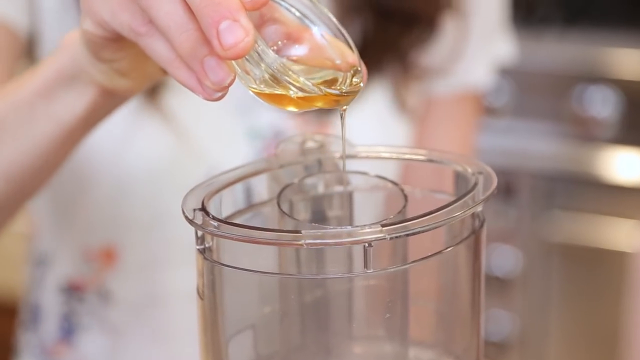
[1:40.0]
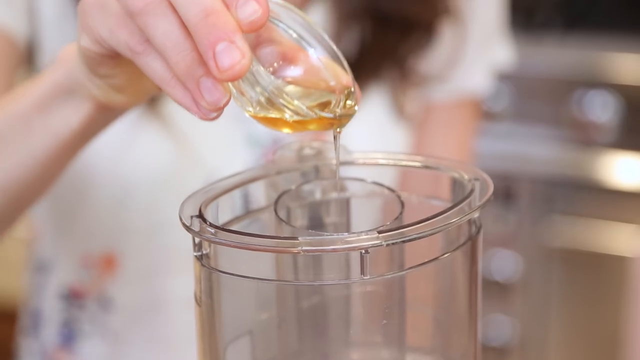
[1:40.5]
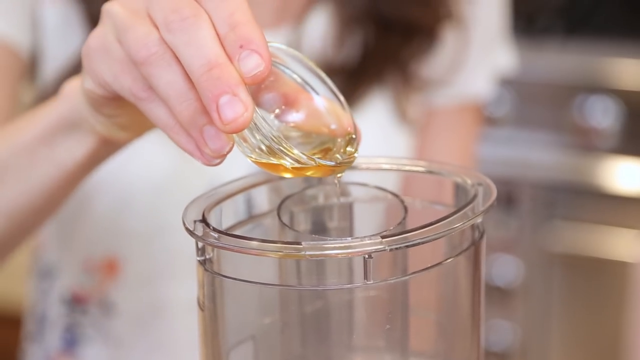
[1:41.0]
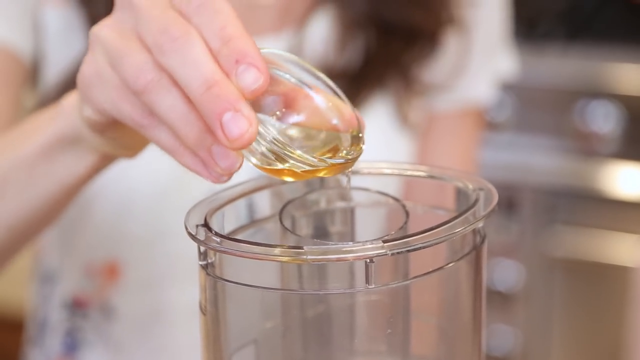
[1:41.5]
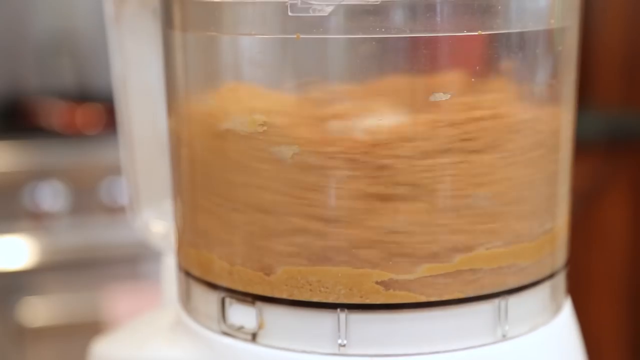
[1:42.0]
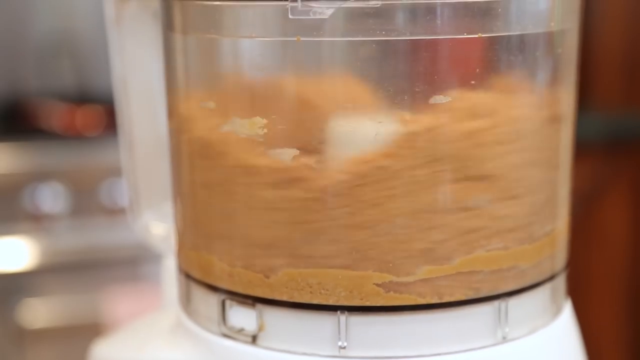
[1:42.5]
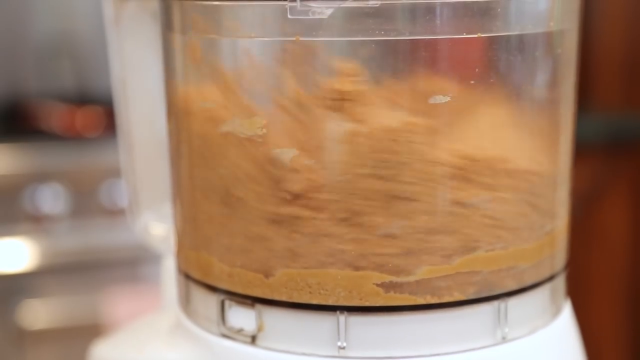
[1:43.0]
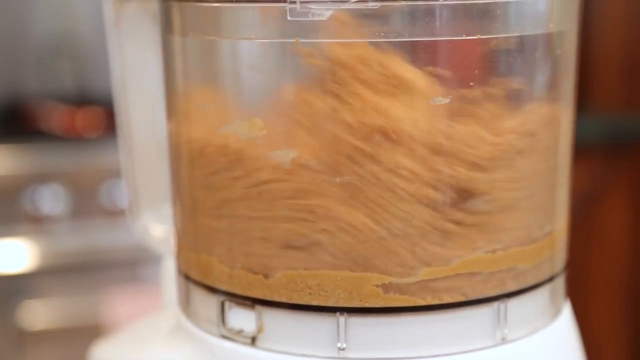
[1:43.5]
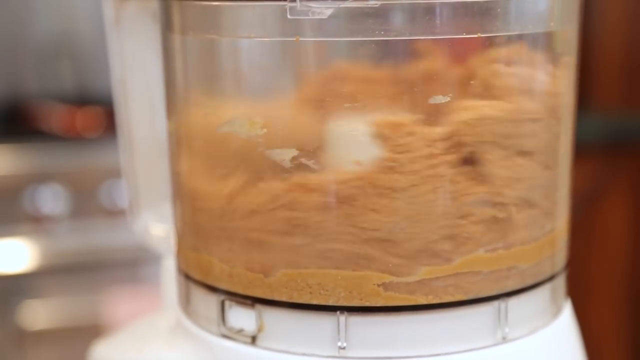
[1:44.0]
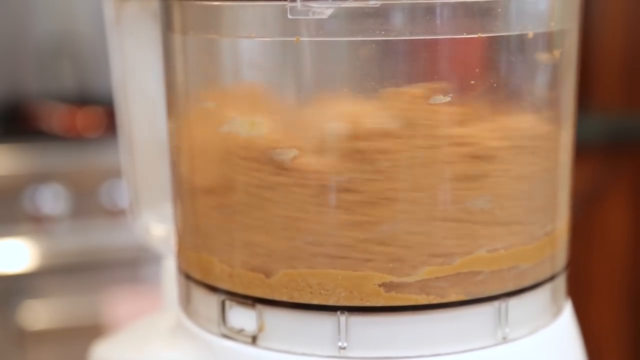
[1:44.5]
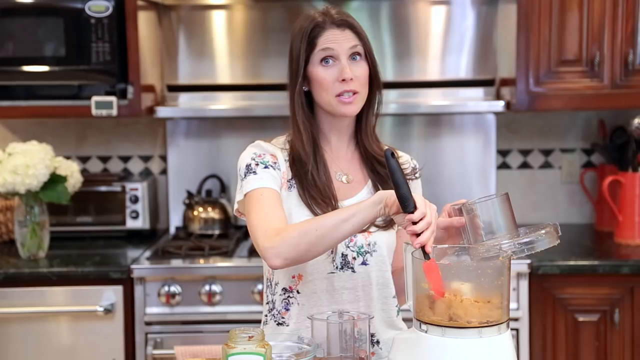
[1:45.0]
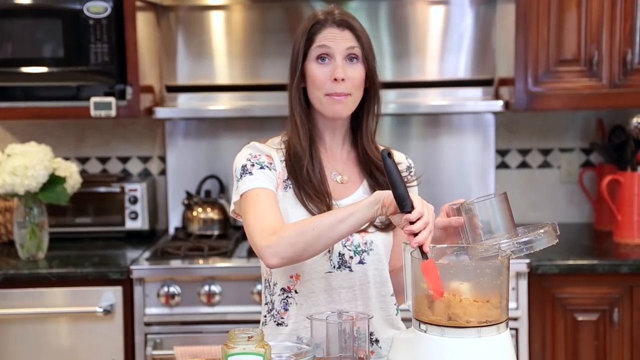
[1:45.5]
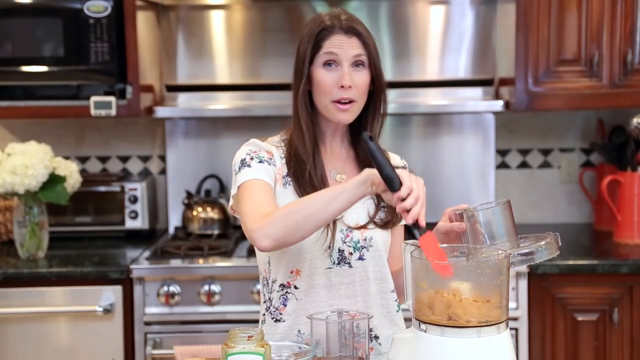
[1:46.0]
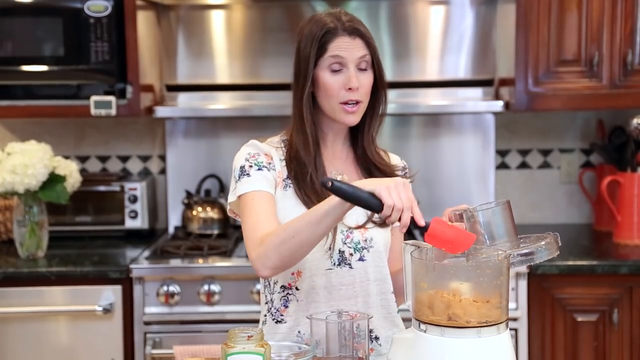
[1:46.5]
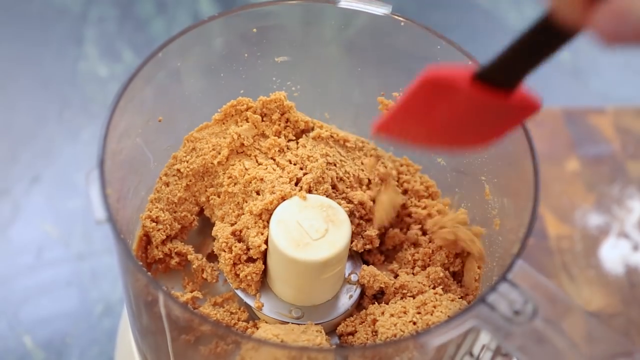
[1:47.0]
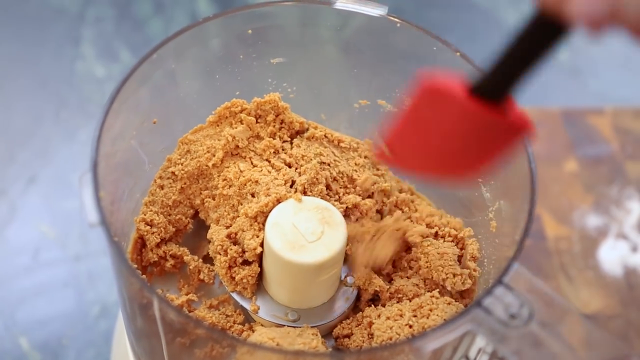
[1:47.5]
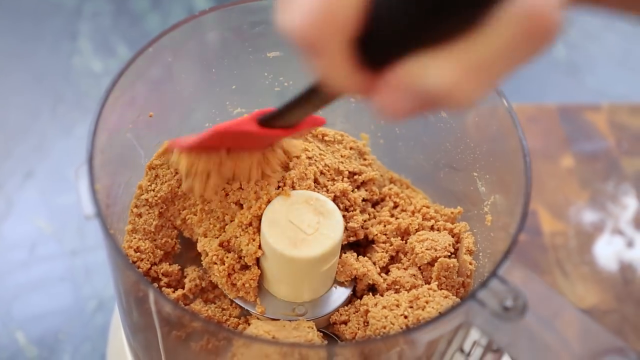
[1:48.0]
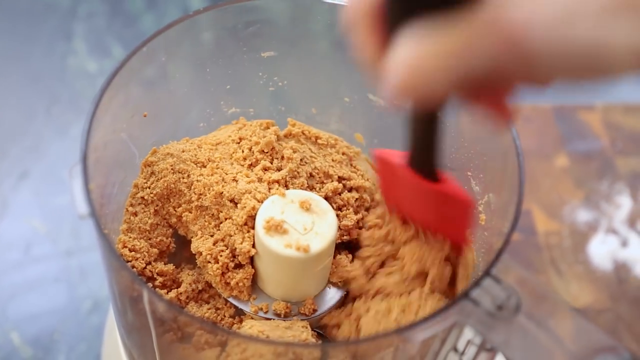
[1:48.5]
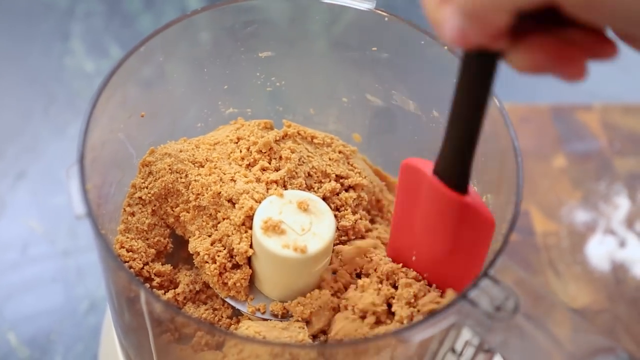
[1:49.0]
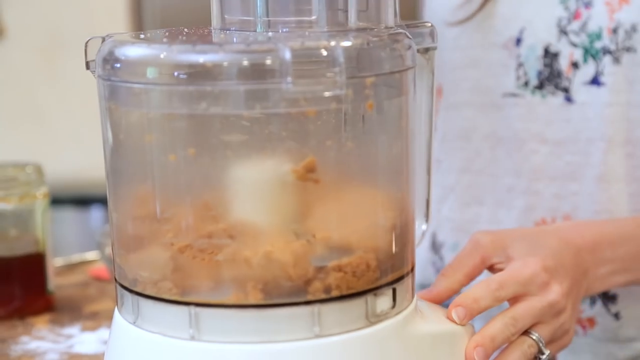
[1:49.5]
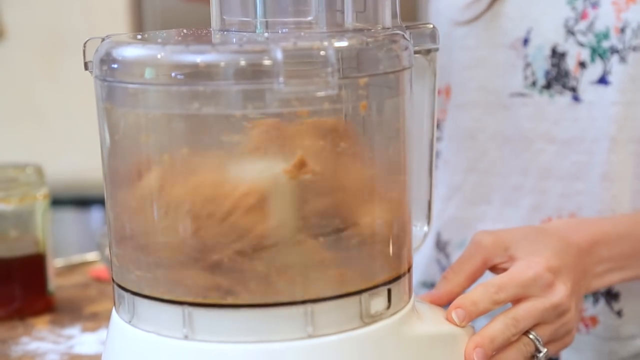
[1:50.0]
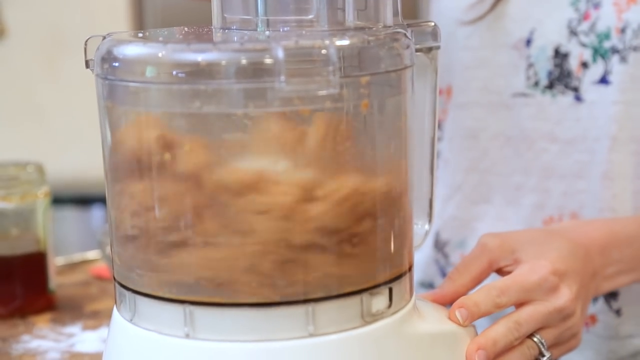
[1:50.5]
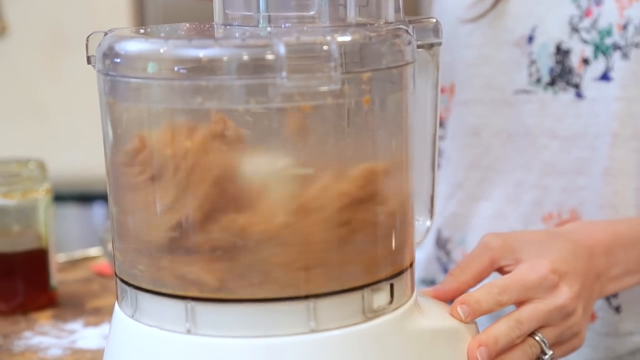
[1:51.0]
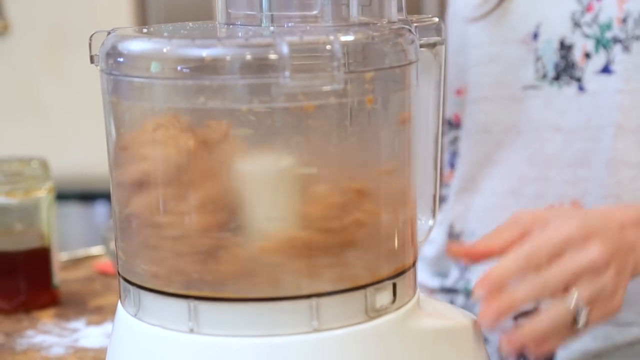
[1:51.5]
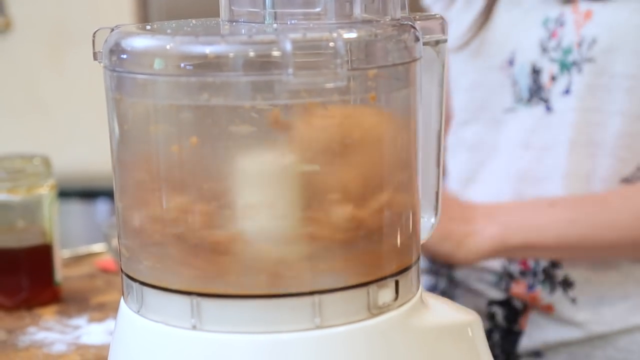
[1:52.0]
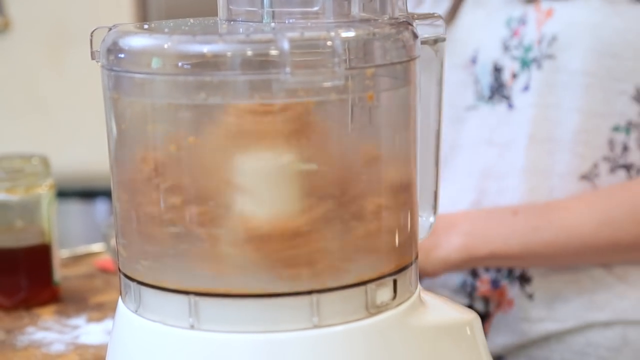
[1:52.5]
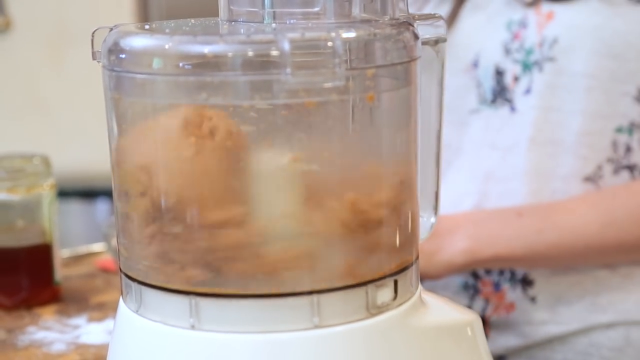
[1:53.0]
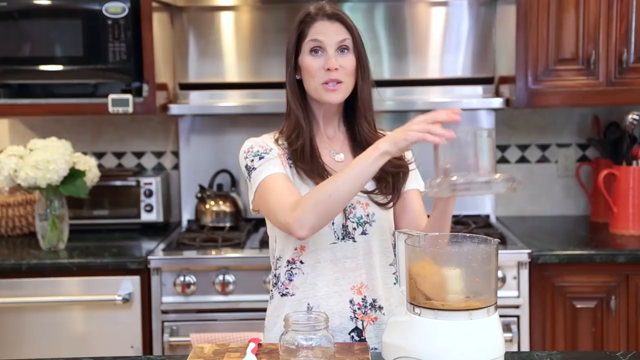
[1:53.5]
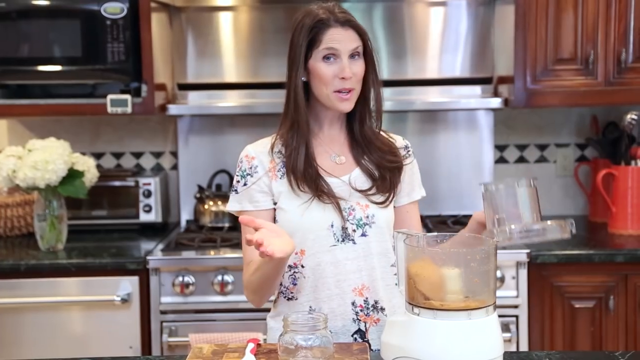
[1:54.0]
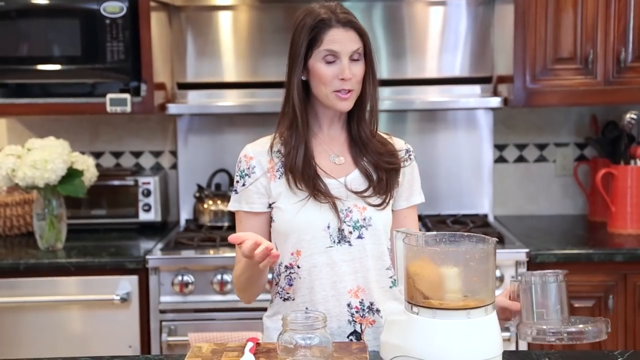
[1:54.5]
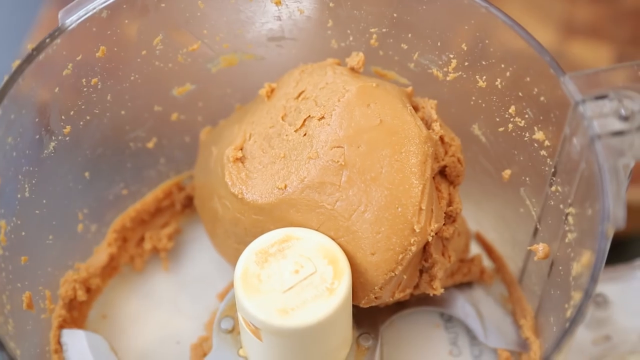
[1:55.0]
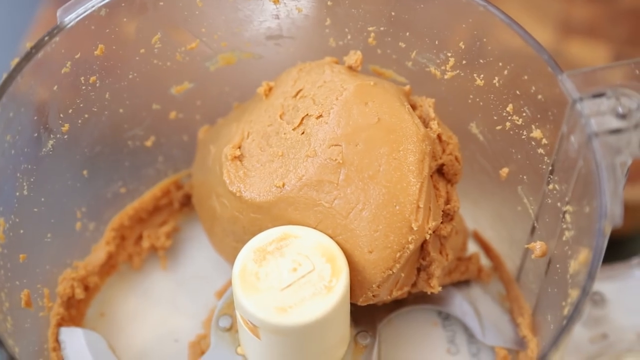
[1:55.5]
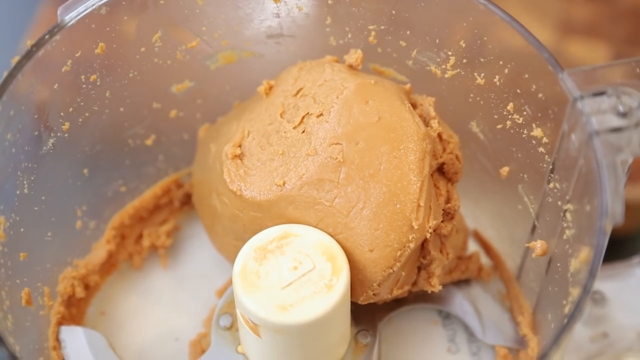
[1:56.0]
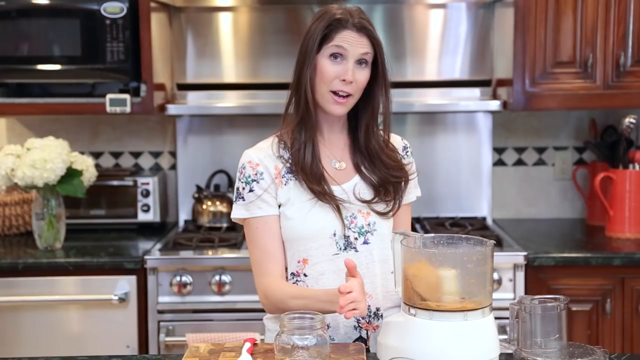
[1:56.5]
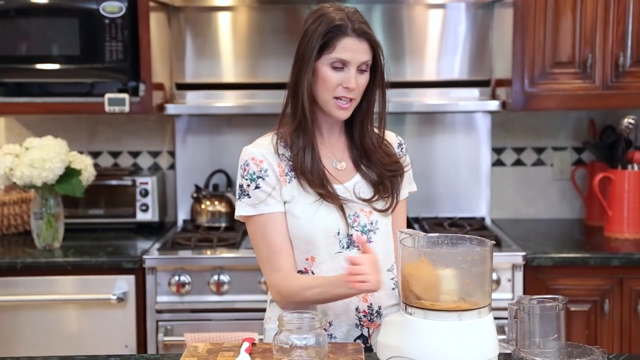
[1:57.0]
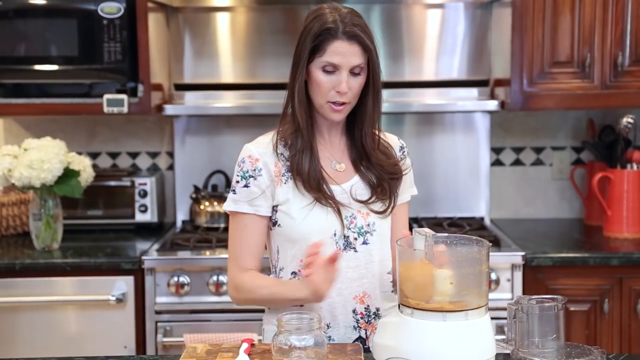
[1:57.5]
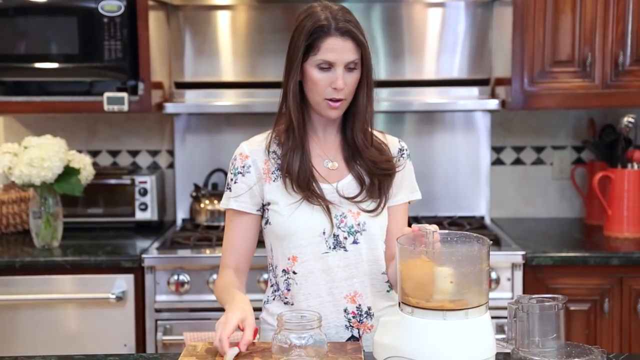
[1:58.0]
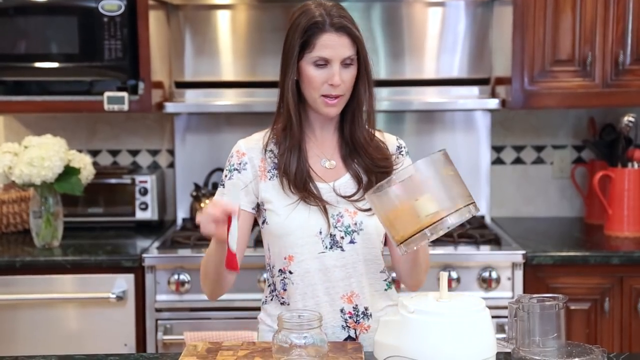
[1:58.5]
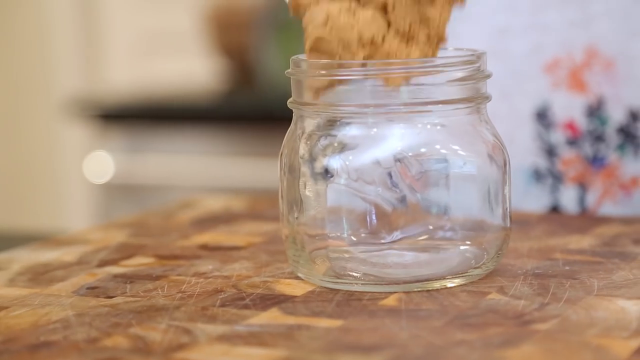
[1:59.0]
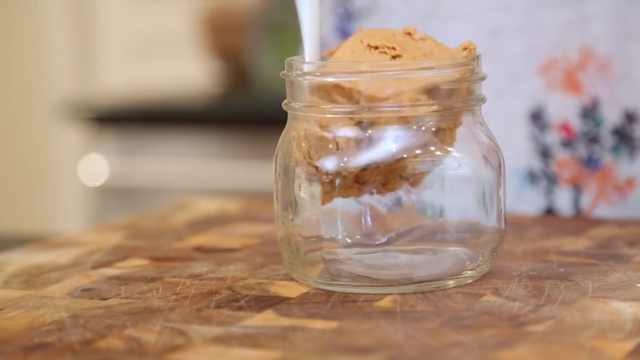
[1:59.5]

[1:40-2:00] The woman pours golden cooking oil from a glass container into the mixture of peanuts, honey and what appears to be salt. The camera zooms into the blender, showing the blending process clearly. She opens the blender to find a thick, very brown powder of what appears to be crushed peanuts, and stirs it with a red spoon. She closes the blender, presses the start button, and the peanuts swirl inside again. When she opens the blender once more, there is a sort of smooth material that appears to be peanut butter.